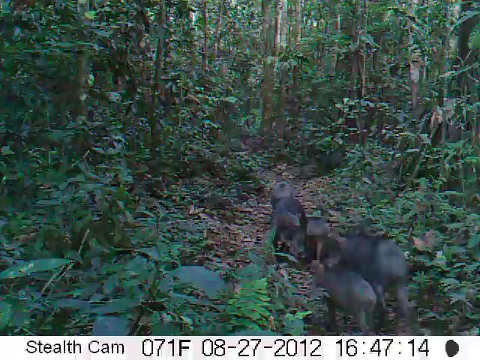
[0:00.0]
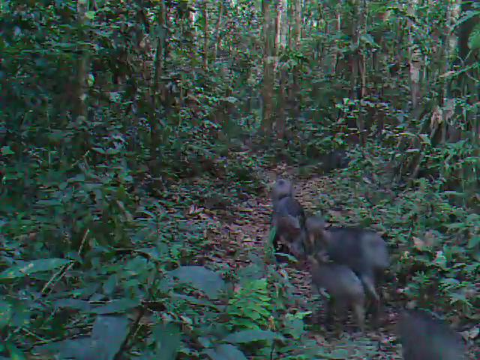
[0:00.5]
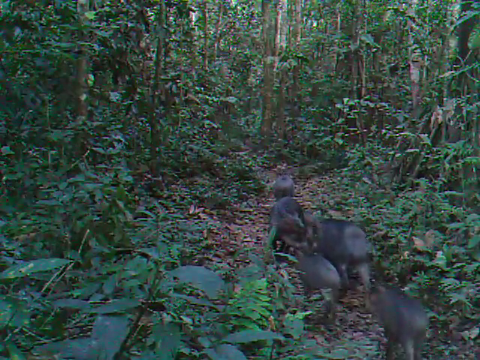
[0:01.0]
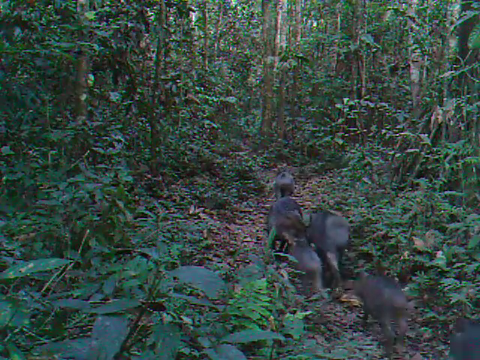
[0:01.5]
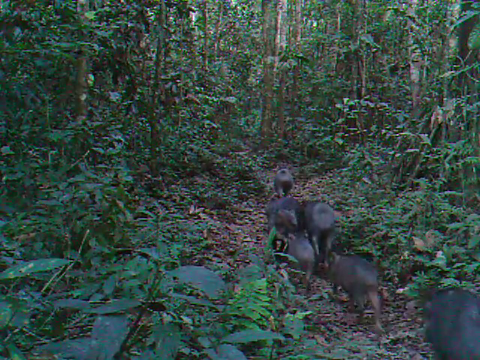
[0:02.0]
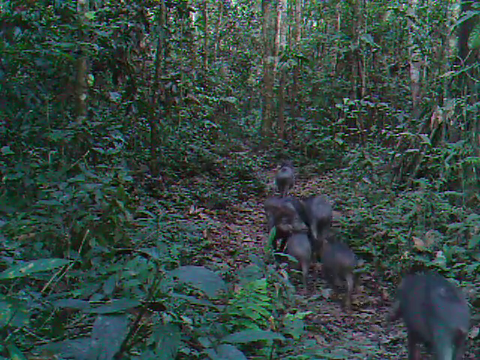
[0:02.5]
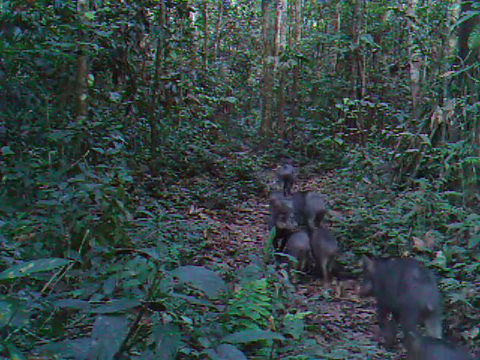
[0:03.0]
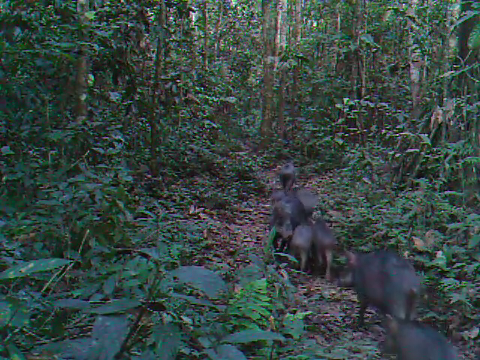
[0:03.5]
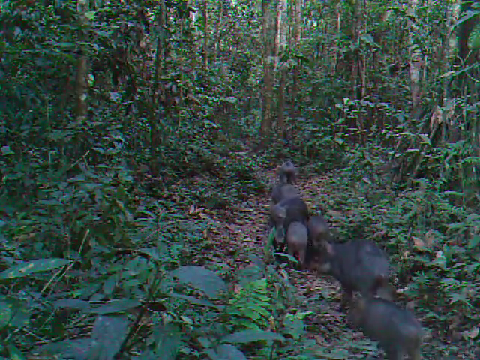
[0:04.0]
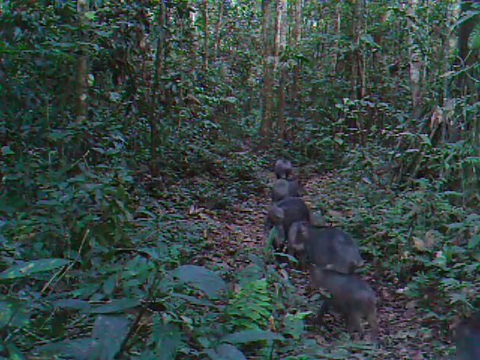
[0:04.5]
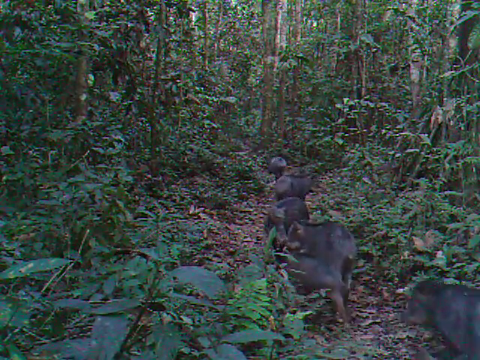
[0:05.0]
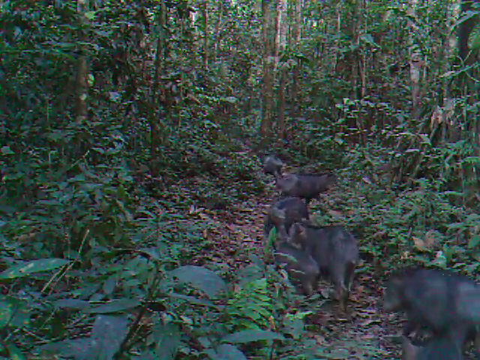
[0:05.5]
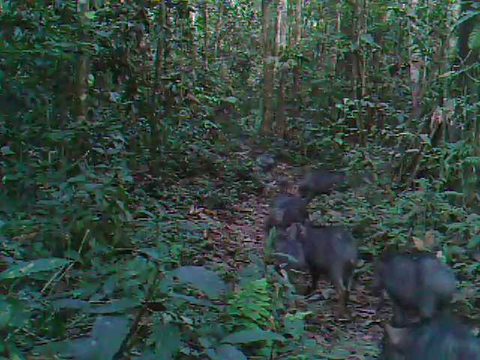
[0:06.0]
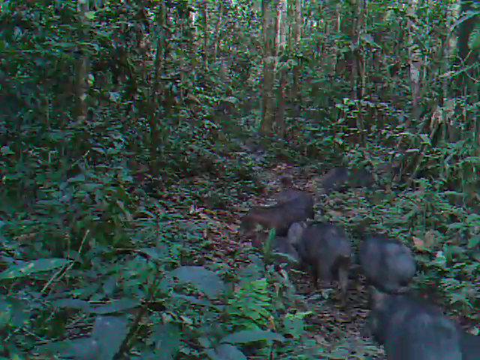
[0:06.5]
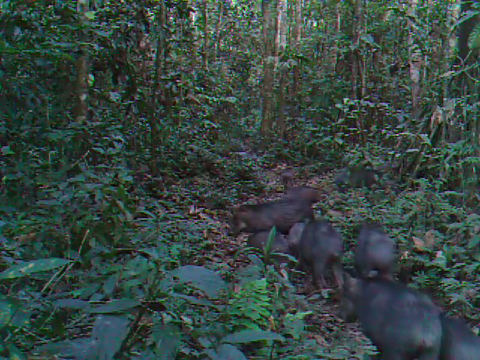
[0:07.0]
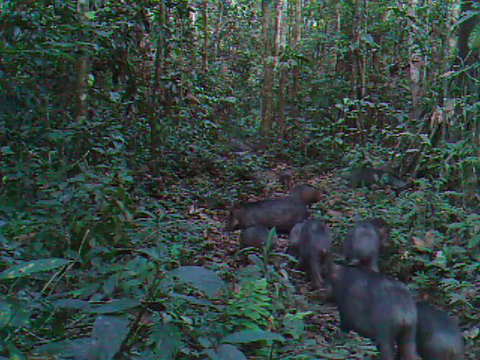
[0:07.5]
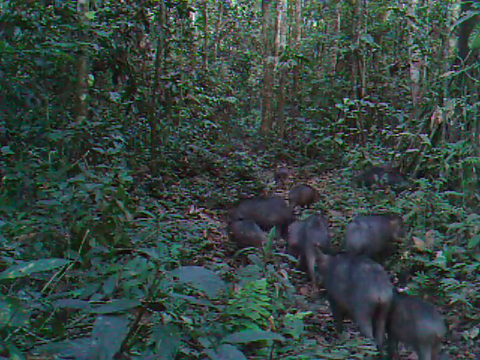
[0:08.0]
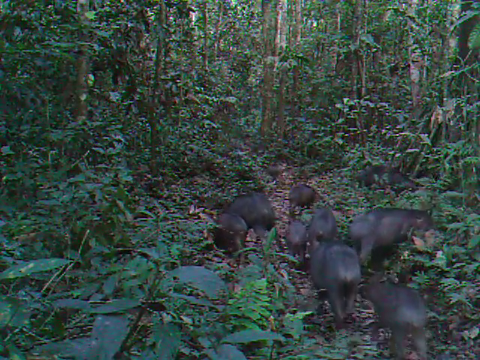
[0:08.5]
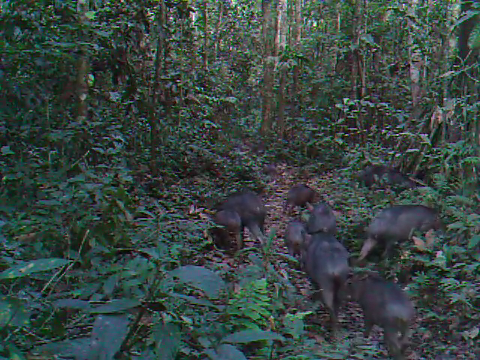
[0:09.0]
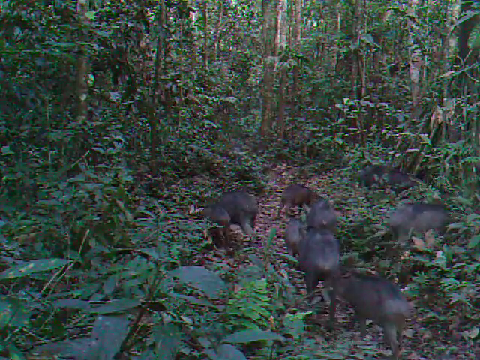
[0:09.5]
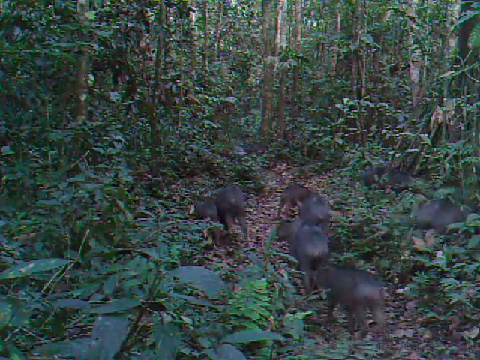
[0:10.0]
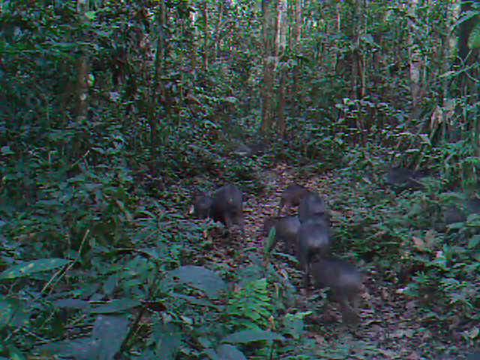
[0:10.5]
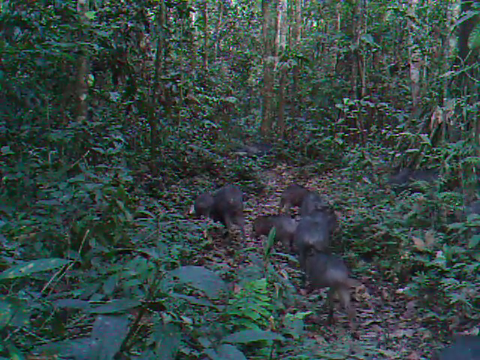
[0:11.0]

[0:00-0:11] A group of what look like warthogs walks through a path in a dense forest. The animals are short and dark gray, and there appear to be about eight or nine of them walking in a straight line. A couple of them turn and go in different directions or turn around and face the ones walking through. Some of them are smaller than others. The path they are walking on is a clearing that looks covered in leaves or dried bits of debris from the forest, while the area around it is completely covered with dense green vegetation, with tall trees surrounding it. The tree trunks are very narrow and light brown, and the trees are covered in deep green leaves. The area looks shaded because there is so much vegetation, and the light is diffused.